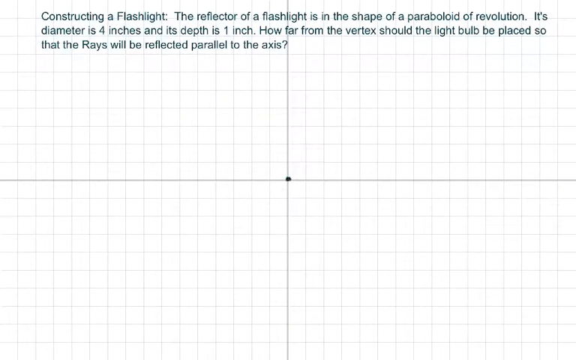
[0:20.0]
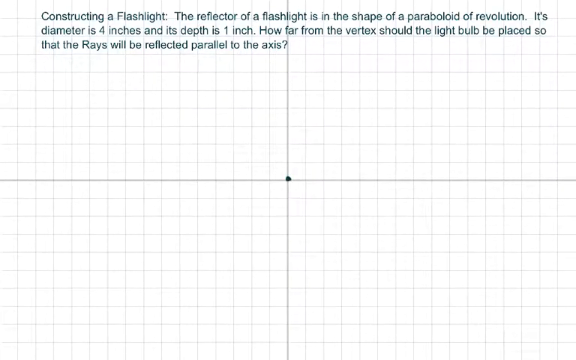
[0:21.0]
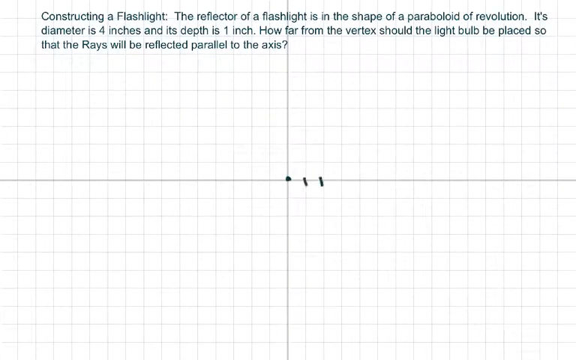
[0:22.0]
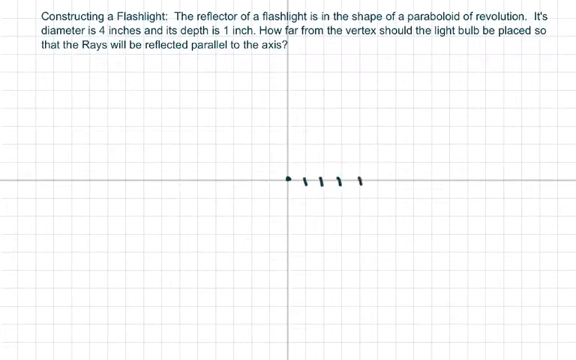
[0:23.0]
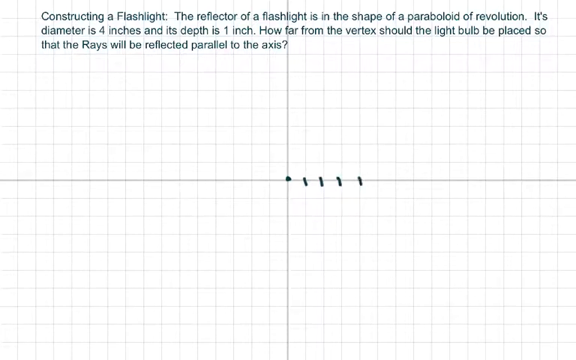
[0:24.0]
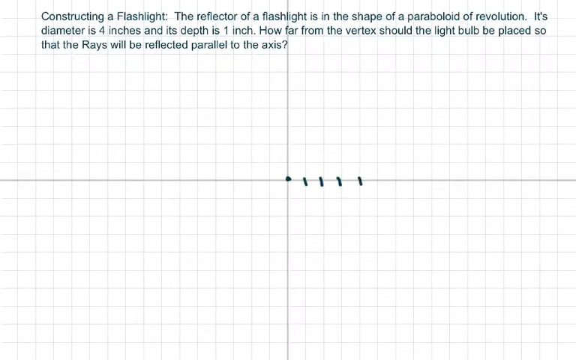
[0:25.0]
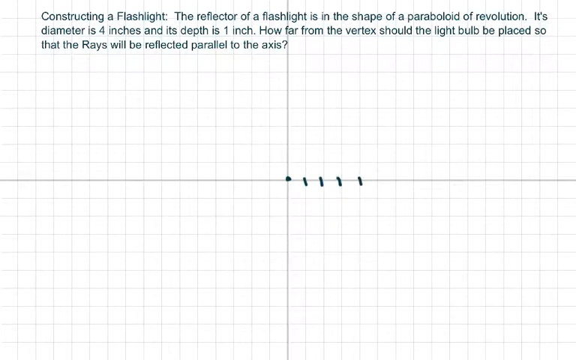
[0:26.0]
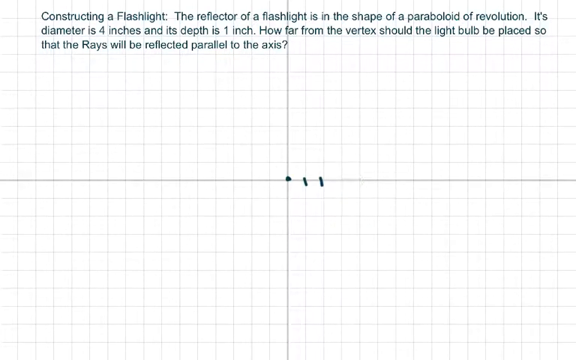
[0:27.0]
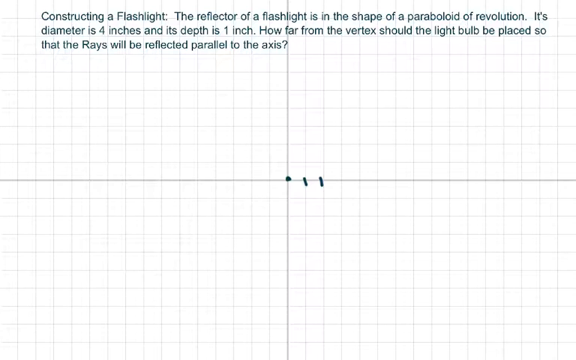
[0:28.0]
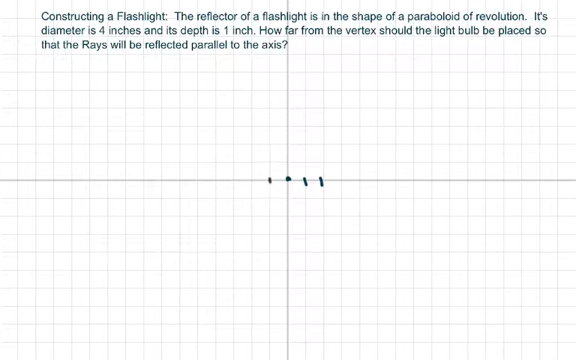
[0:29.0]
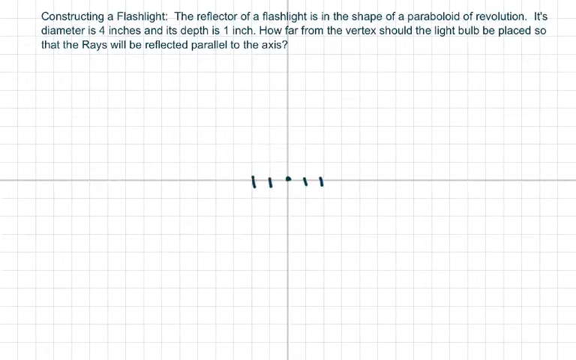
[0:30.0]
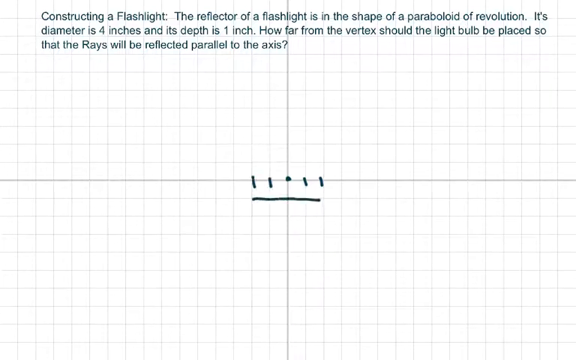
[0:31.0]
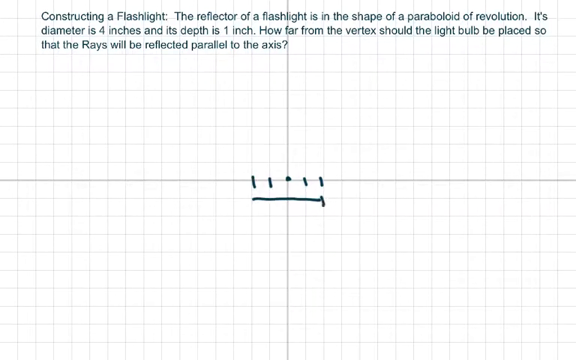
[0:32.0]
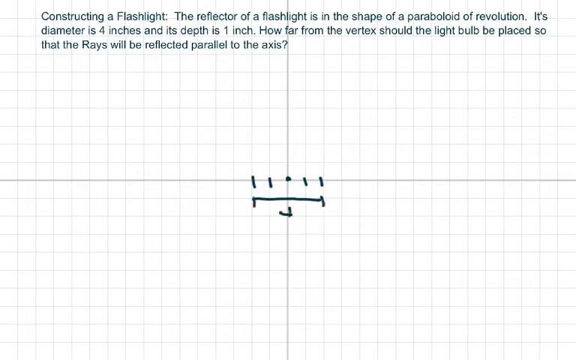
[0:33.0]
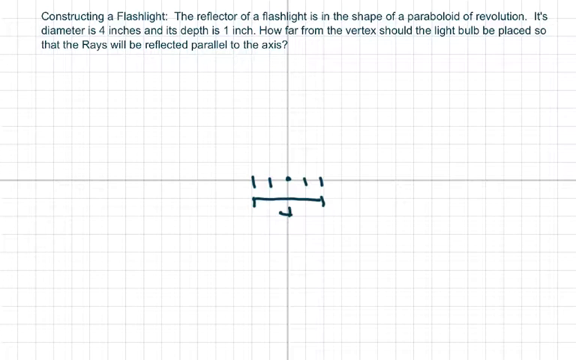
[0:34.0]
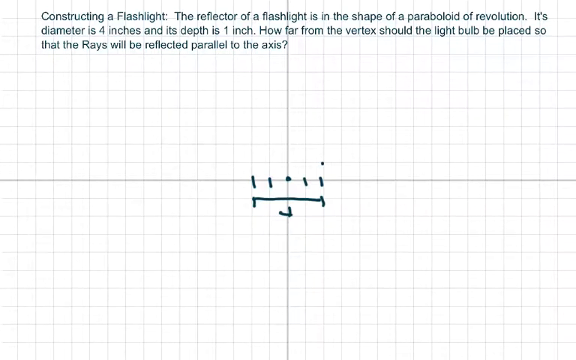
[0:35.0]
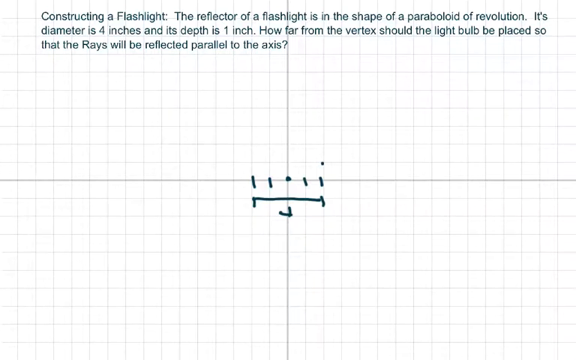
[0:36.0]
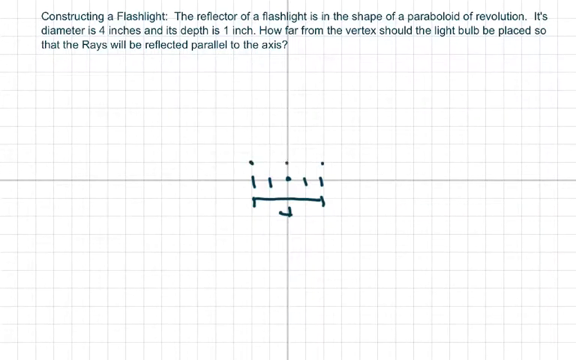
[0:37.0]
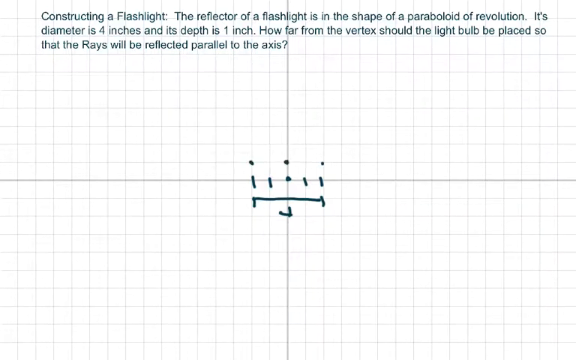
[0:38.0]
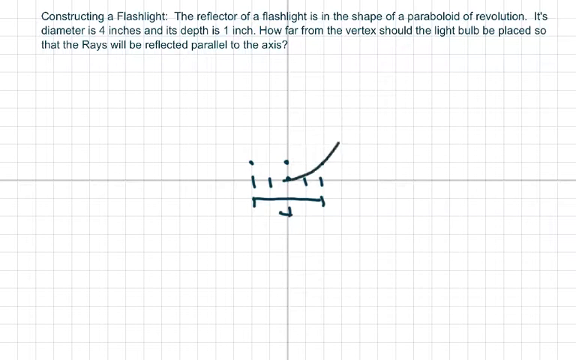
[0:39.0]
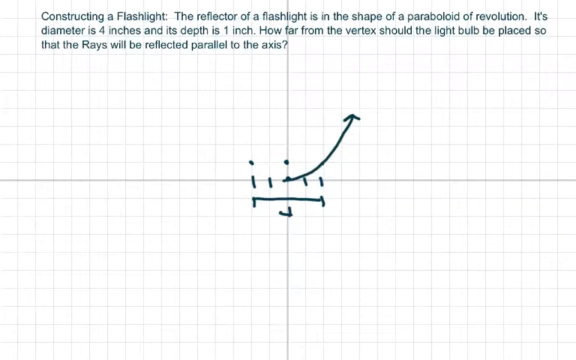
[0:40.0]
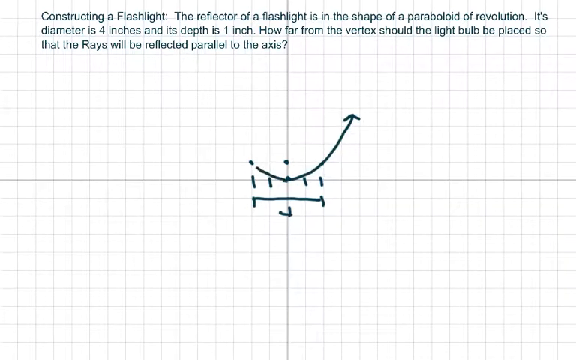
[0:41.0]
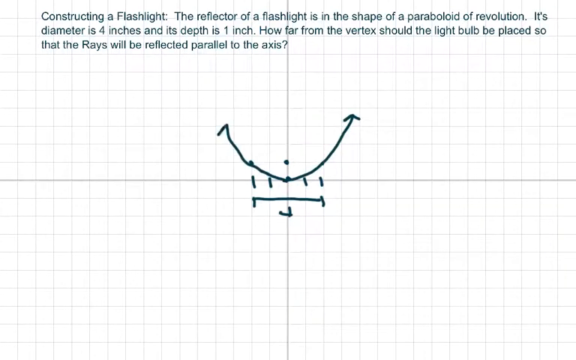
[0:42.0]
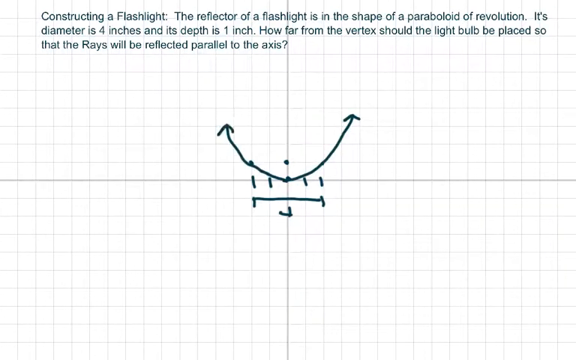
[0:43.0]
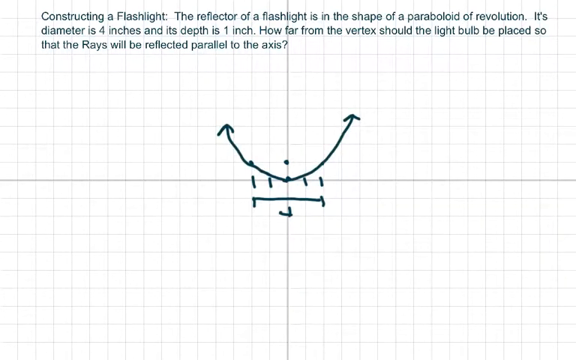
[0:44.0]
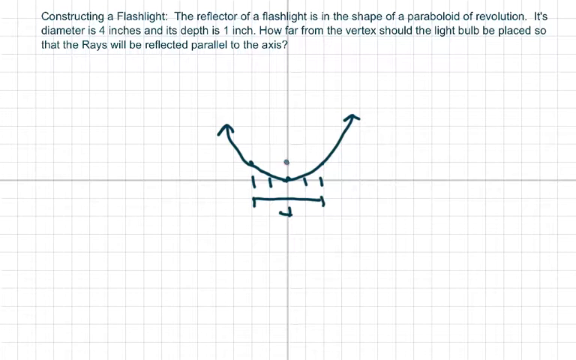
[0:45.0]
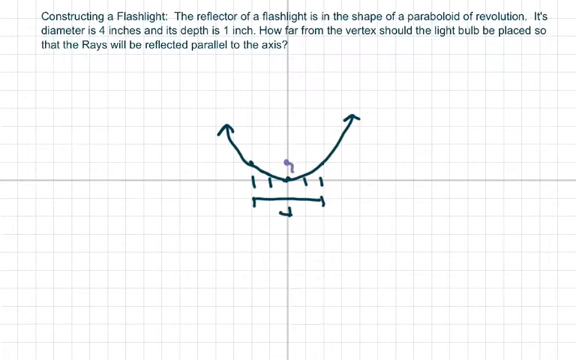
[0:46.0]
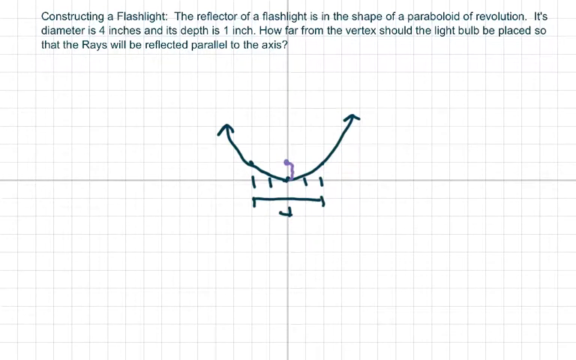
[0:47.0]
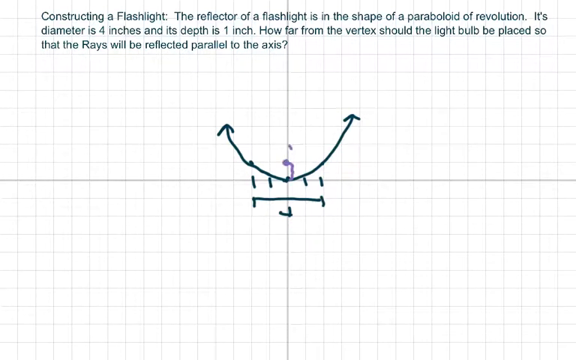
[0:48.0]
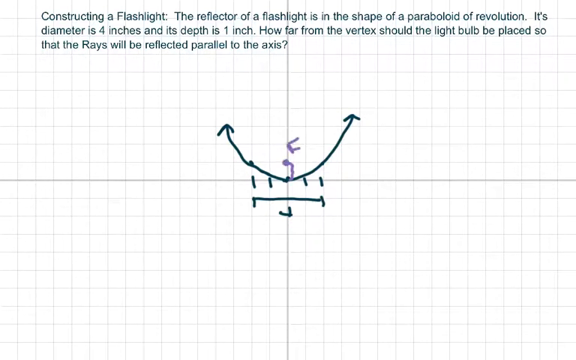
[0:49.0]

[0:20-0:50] Four lines are drawn on the right-hand line; then two of them are removed and two are drawn on the left-hand line. A line is drawn below, under the four lines, and a drawing made of two small lines connects to that lower line. Three dots are made up above. A smiley-shaped drawing appears with an arrow on its right-hand side and another arrow on its left-hand side, and something is drawn in the middle in purple.